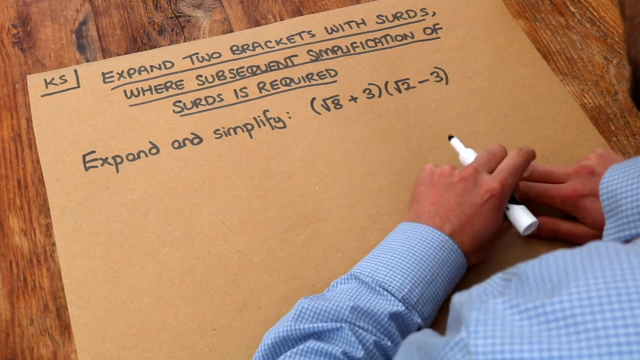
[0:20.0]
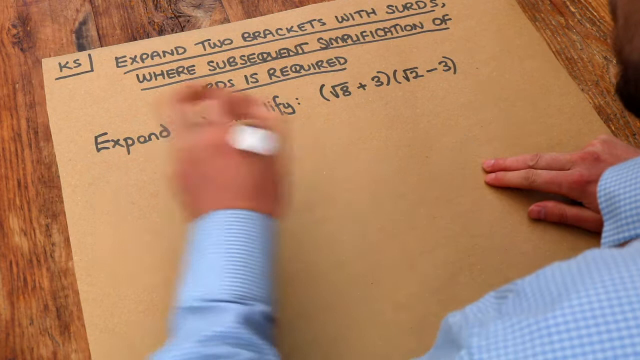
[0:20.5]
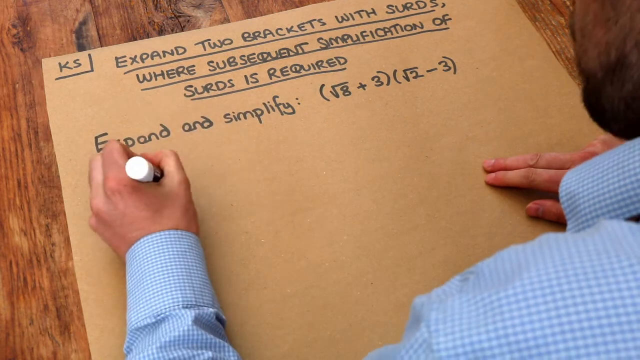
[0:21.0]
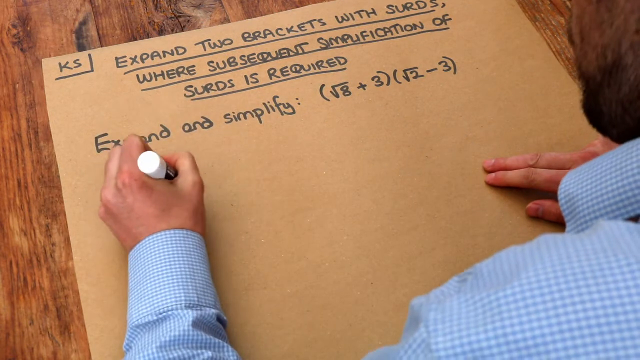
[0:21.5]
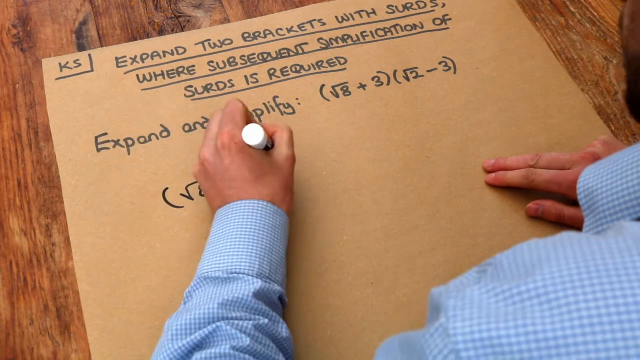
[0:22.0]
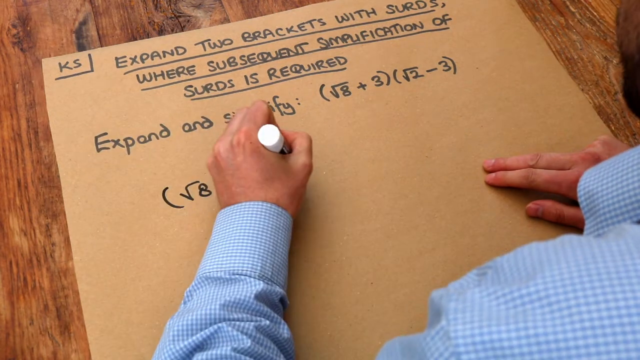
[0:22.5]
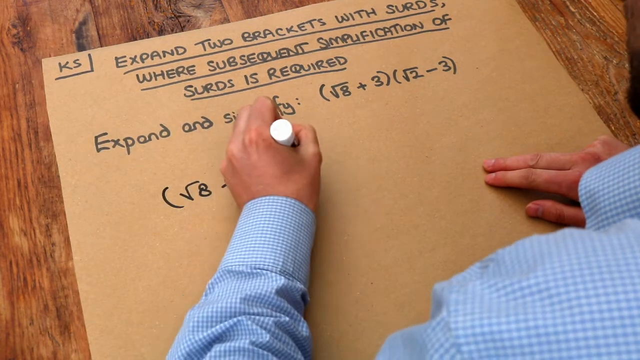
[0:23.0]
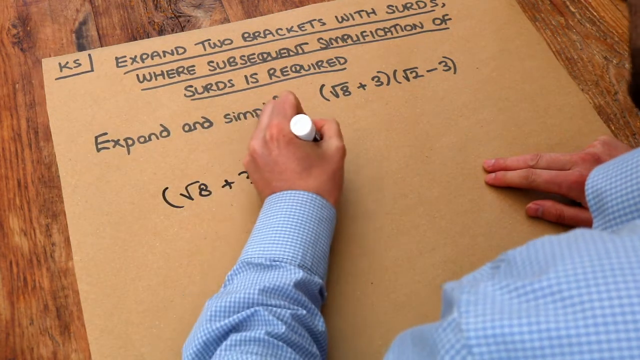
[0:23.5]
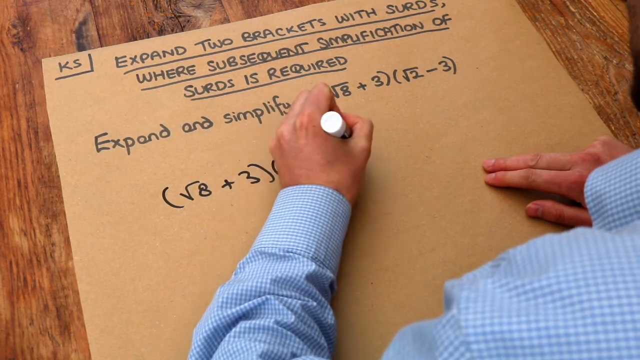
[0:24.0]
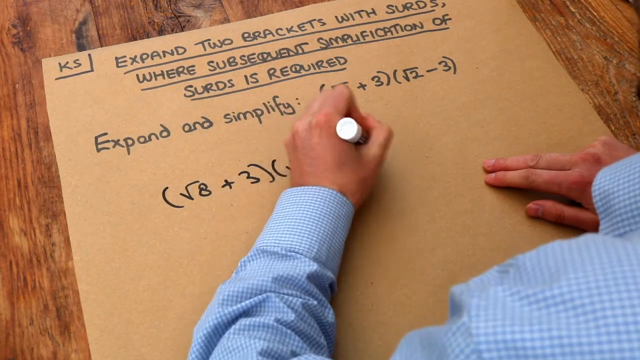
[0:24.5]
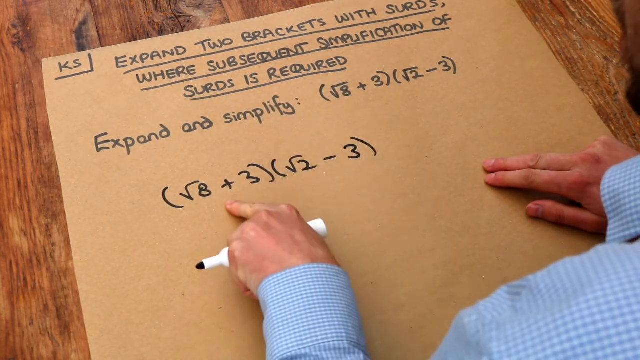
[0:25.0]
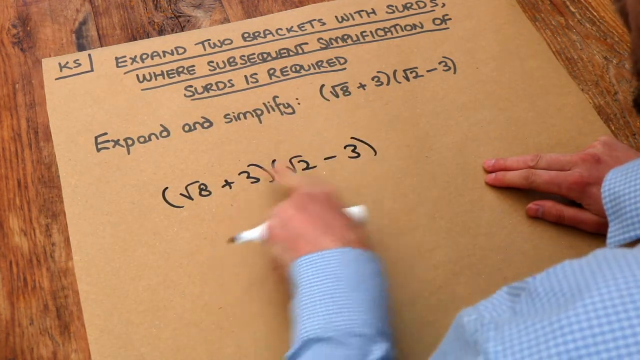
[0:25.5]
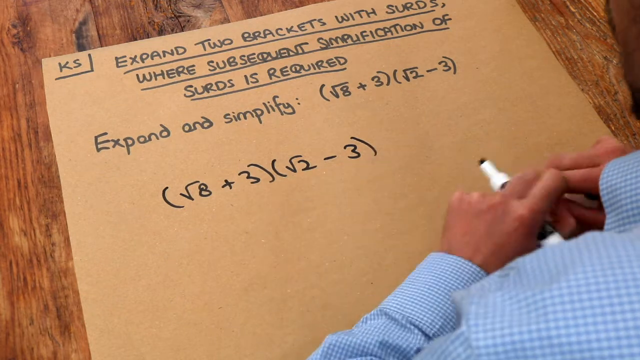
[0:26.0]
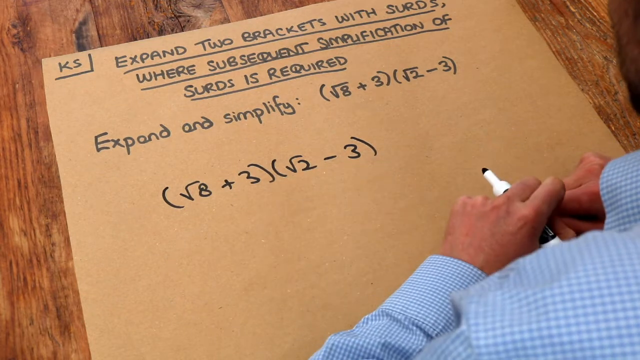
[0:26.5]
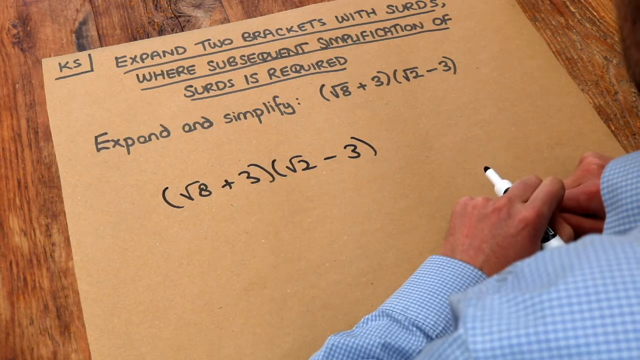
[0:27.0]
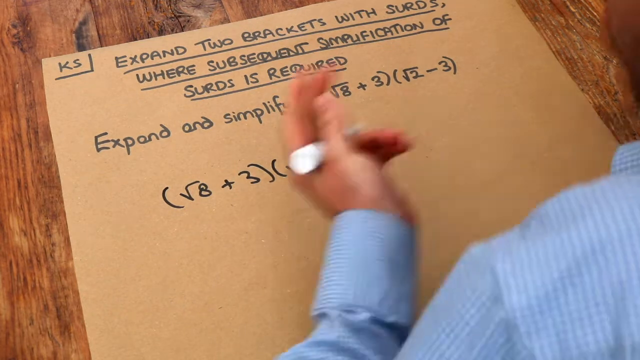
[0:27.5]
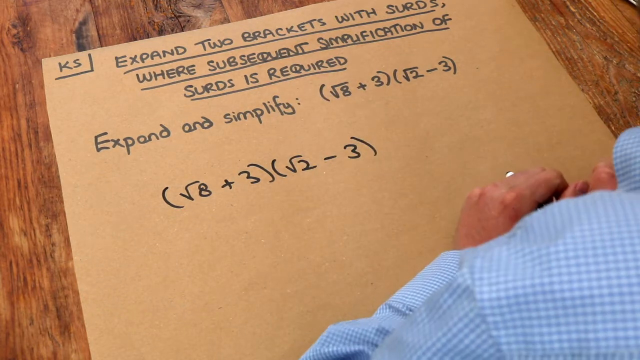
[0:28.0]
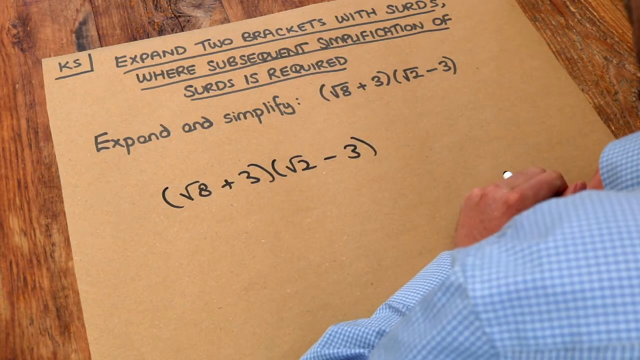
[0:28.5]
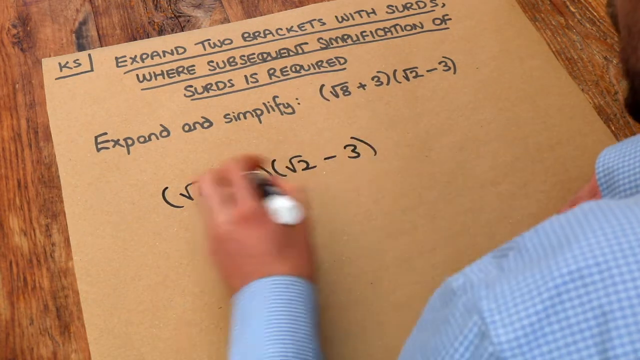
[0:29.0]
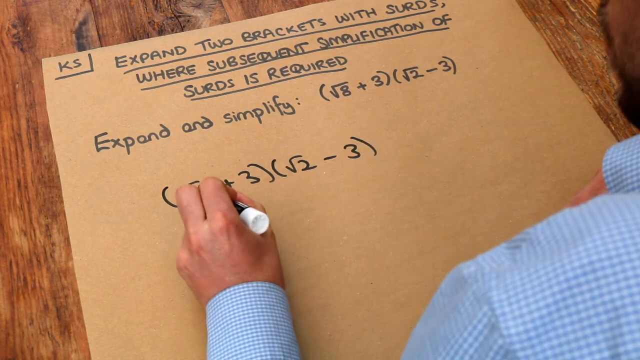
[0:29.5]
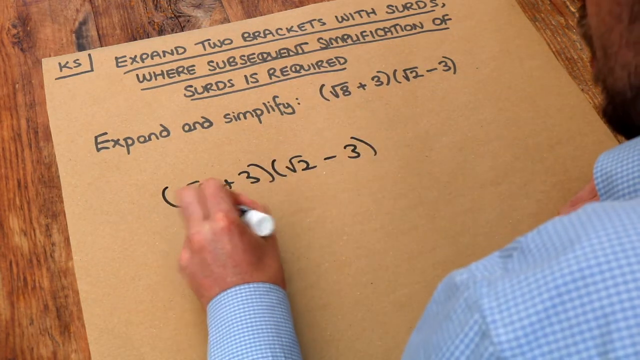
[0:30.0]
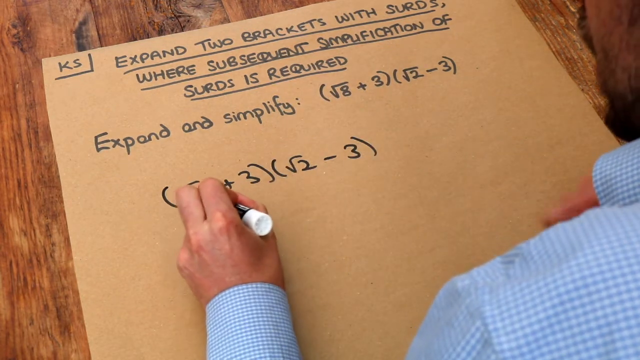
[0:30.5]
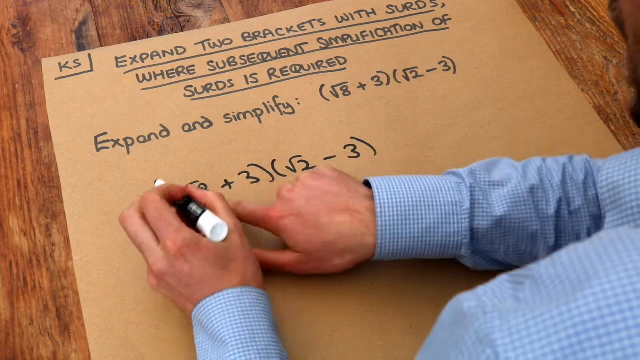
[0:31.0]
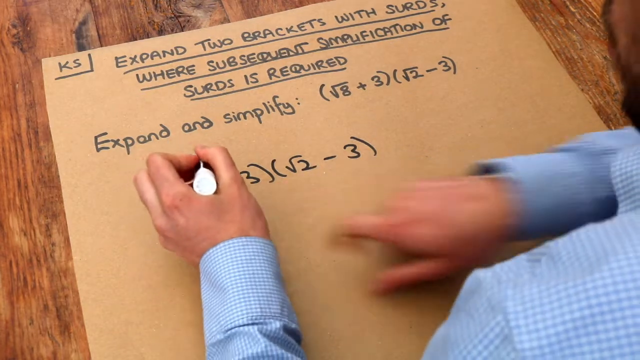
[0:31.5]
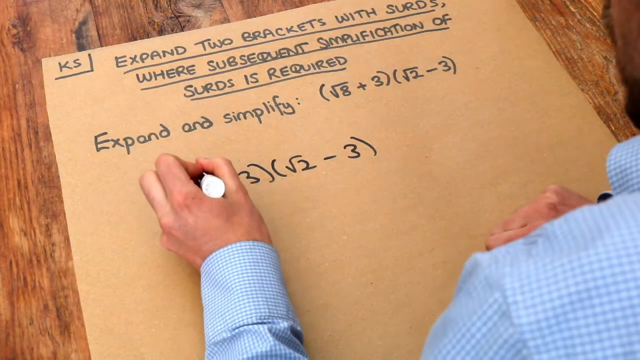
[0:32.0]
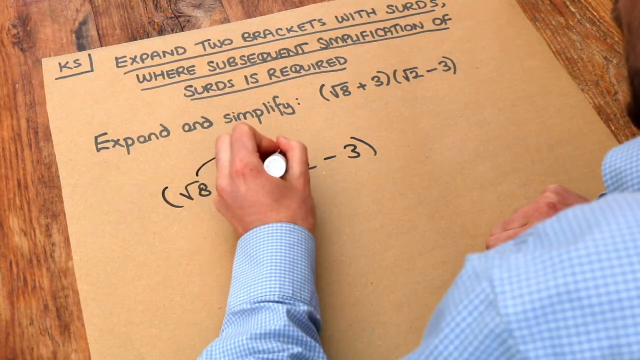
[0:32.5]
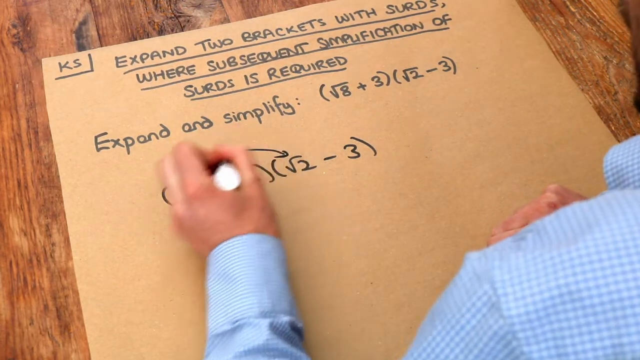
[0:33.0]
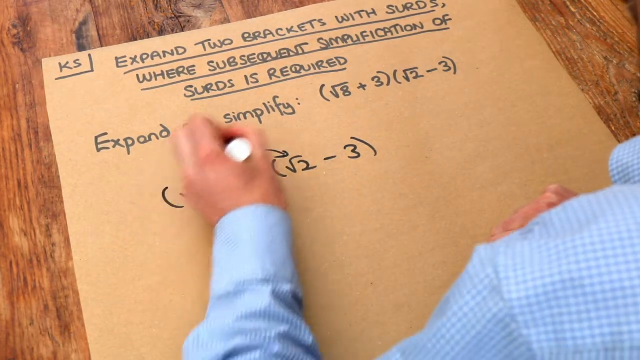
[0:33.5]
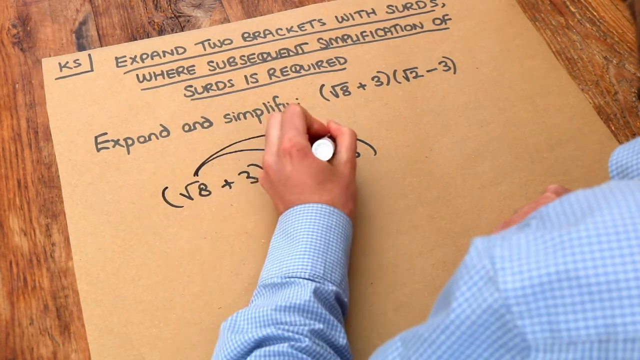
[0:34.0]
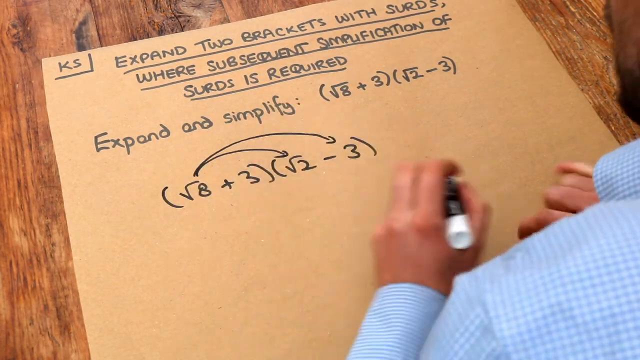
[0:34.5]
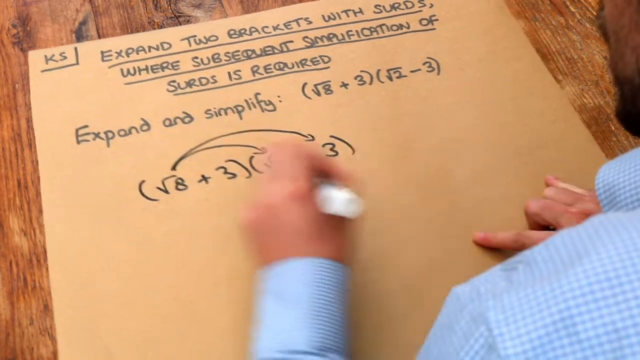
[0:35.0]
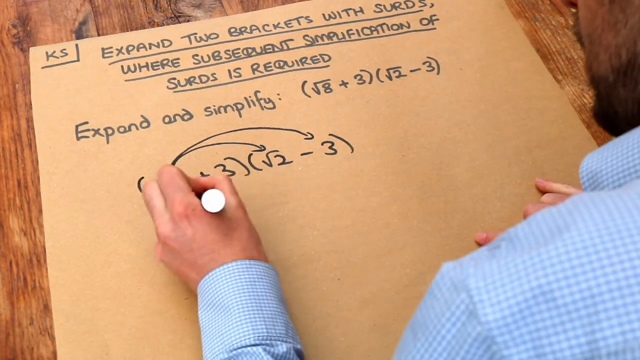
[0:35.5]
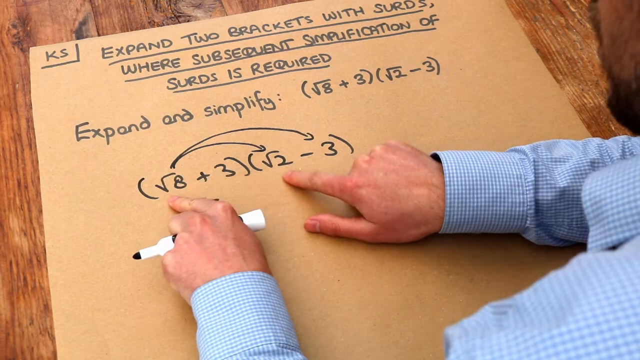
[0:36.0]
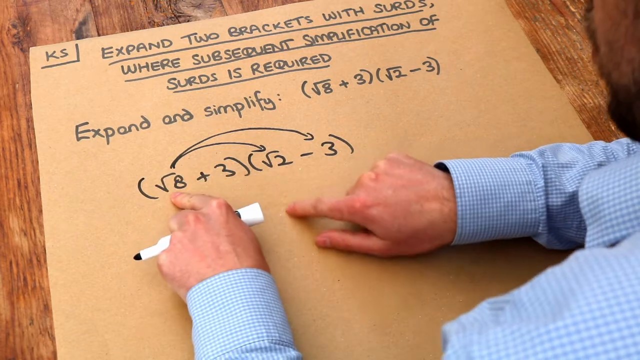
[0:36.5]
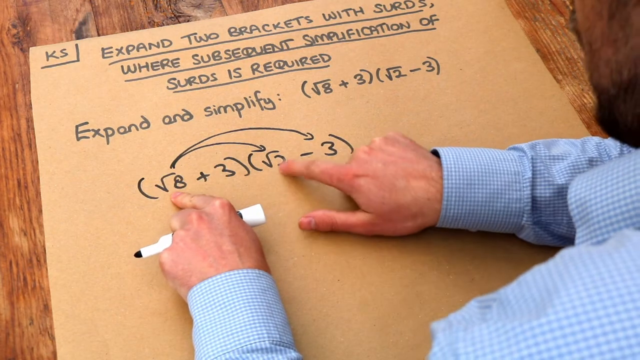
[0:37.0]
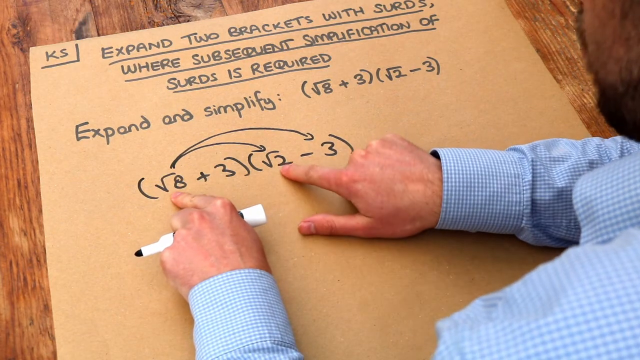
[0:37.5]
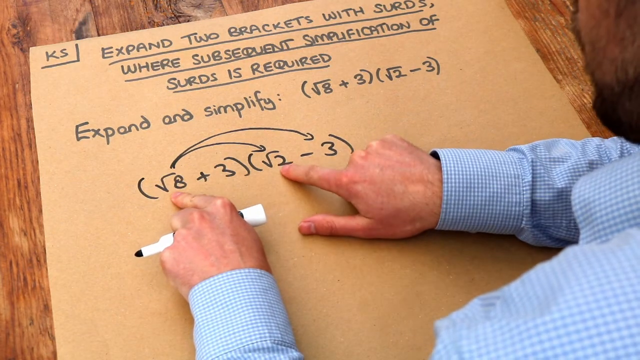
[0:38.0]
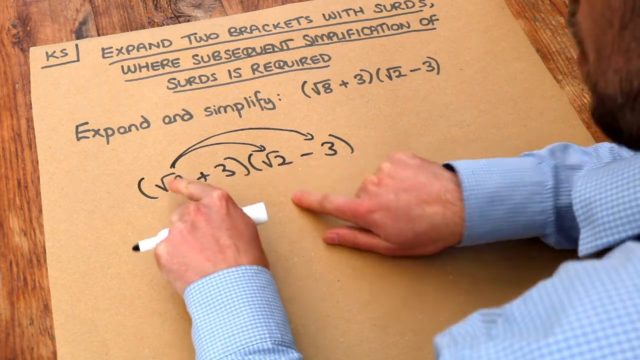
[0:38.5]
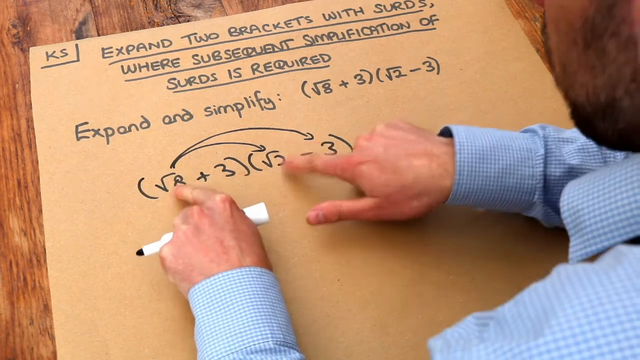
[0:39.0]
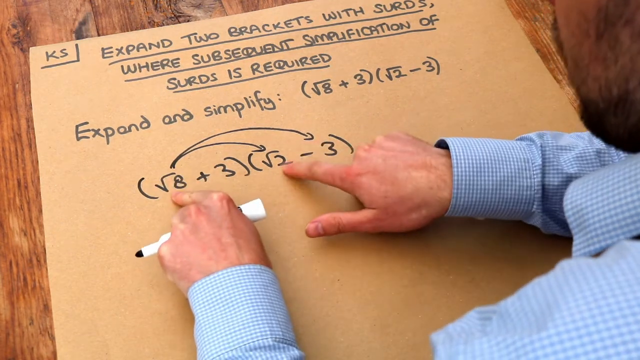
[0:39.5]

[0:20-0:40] The hand holding the marker moves up under the N in "expand" and starts to write. The back of the hand, the webbing between thumb and pointer finger, the back of the pointer finger, and the bent middle finger and thumb gripping the marker are visible, with the marker's tip pointing up and a little of its black on the right side. The other hand rests in from the right side with two fingers and the thumb pointing out. A little of the side of the person's jaw line shows, covered in hair that is a little patchy at the top but pretty thick around the chin. He writes, in soft brackets, the square root of 8 plus 3, then in soft brackets the square root of 2 minus 3, and points at each with his pointer finger, the marker's tip pointing left and its other end pointing right. He brings his hands back down, raises them, one going off the right side while the left goes over and back down to rest in front of him. His jaw moves a little, showing that he is talking, though his mouth is not visible. He points at the numbers with one hand, then the other, and draws arrows from the square root of 8 over to the square root of 2 and the 3. He moves the cardboard a little to the left and points at the square root of 8 and the square root of 2 with one finger of each hand.